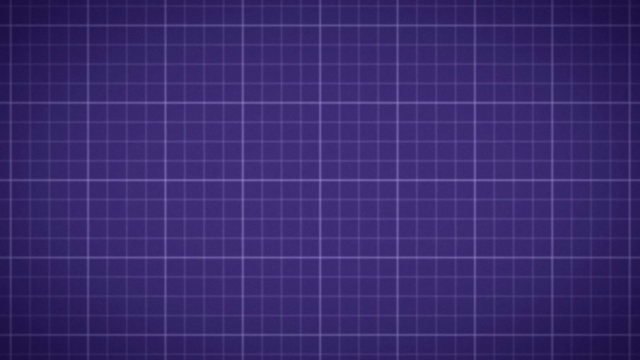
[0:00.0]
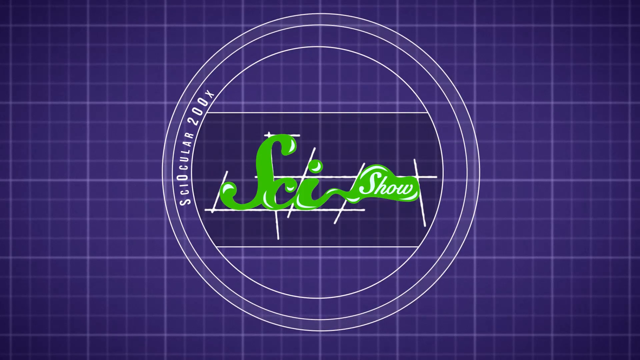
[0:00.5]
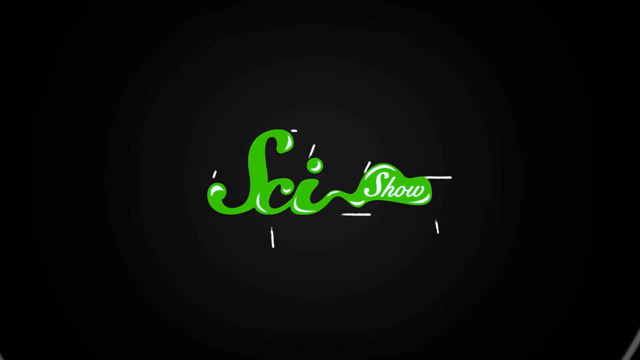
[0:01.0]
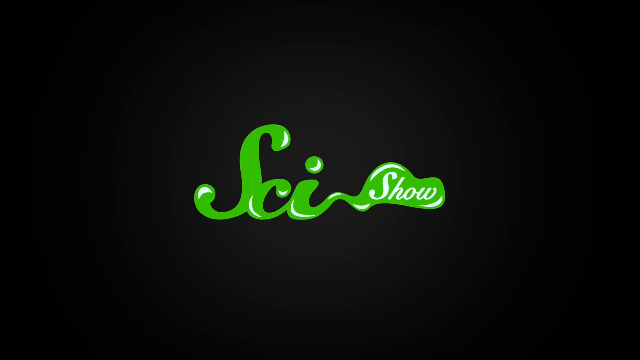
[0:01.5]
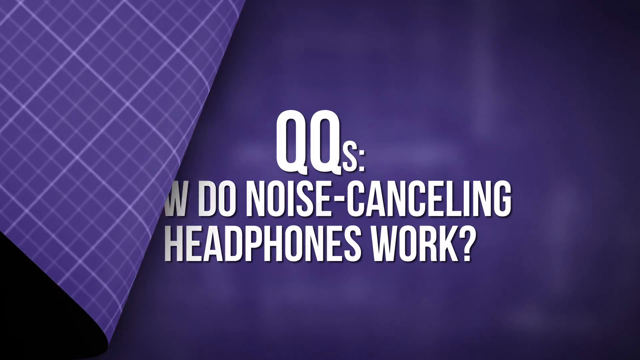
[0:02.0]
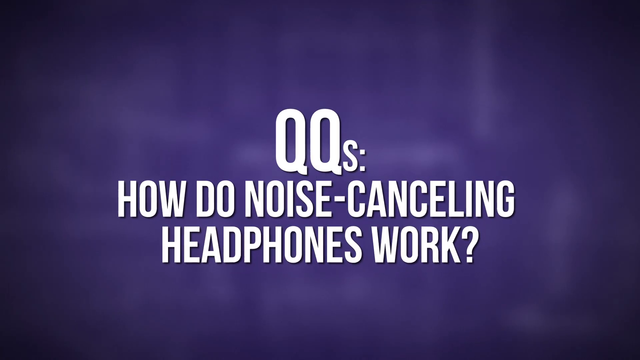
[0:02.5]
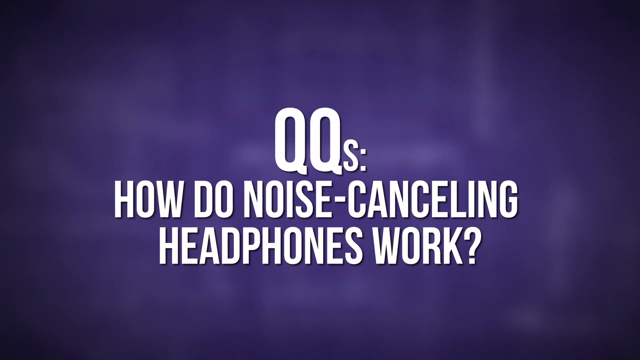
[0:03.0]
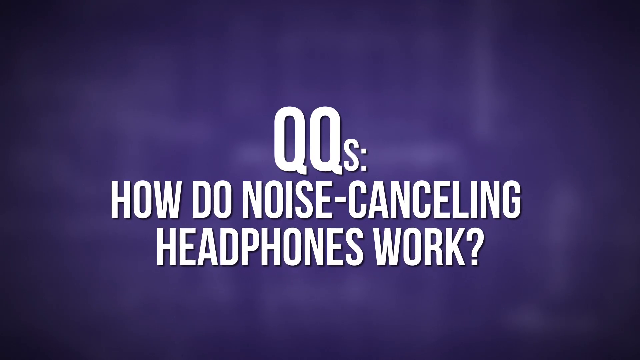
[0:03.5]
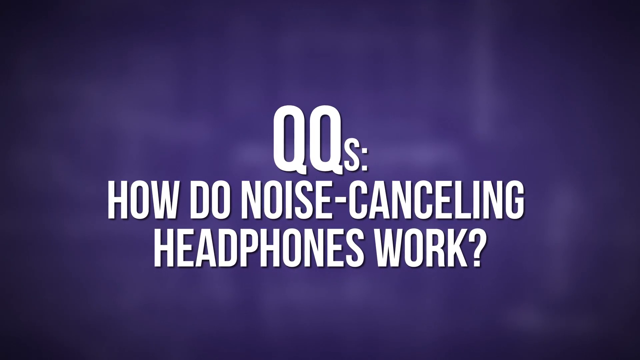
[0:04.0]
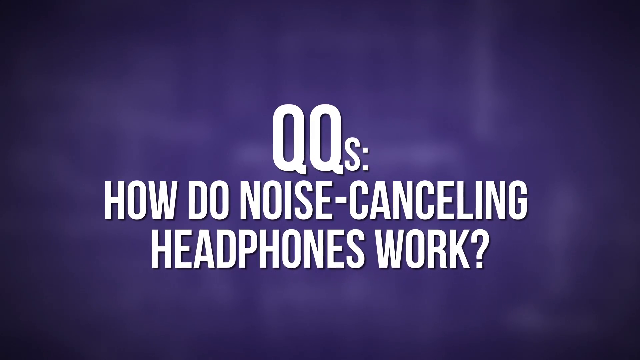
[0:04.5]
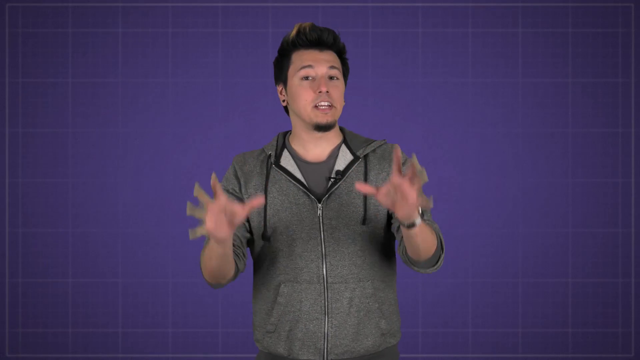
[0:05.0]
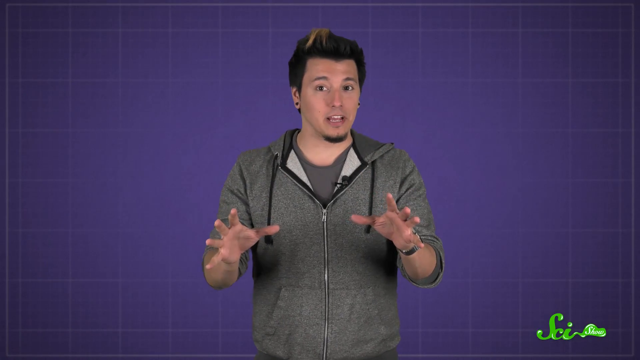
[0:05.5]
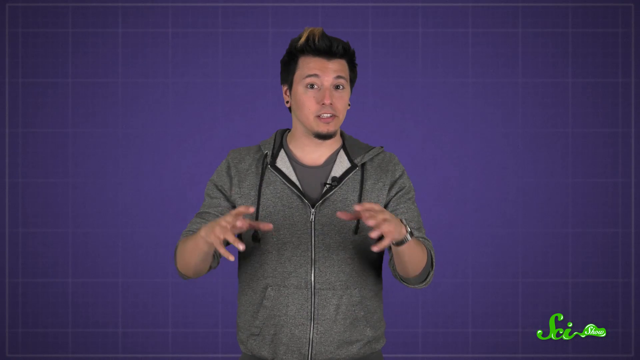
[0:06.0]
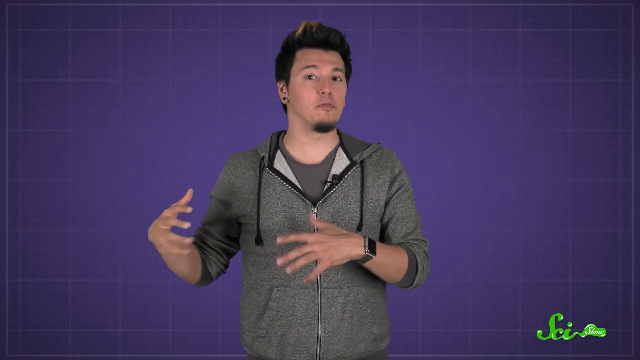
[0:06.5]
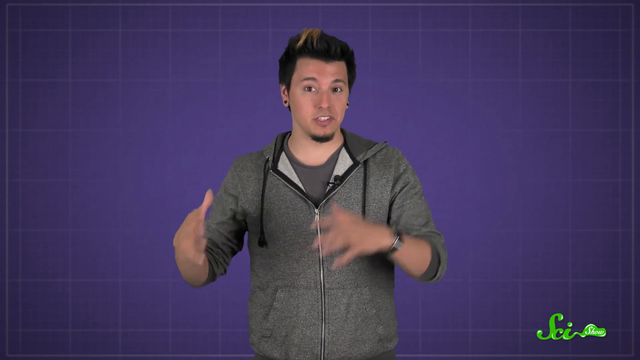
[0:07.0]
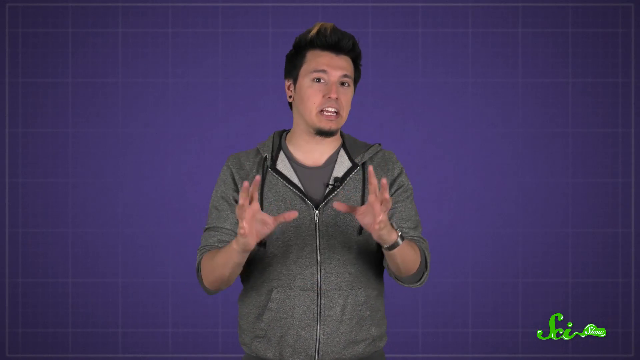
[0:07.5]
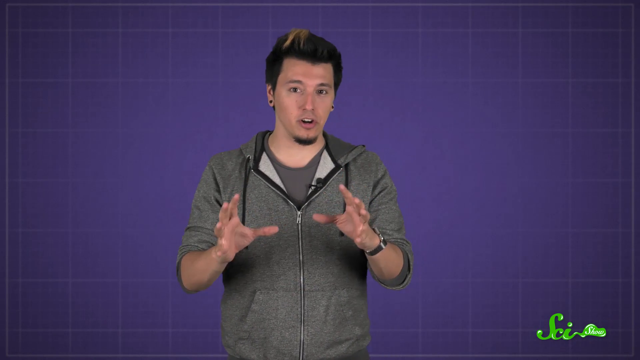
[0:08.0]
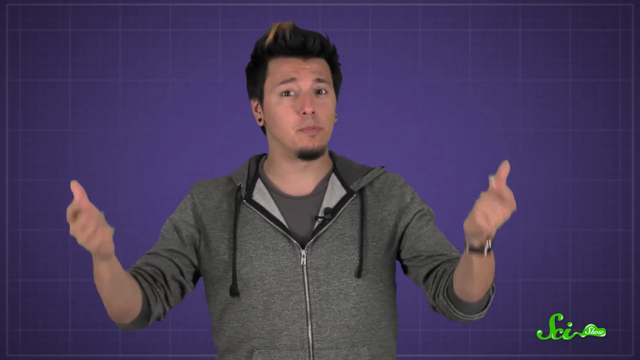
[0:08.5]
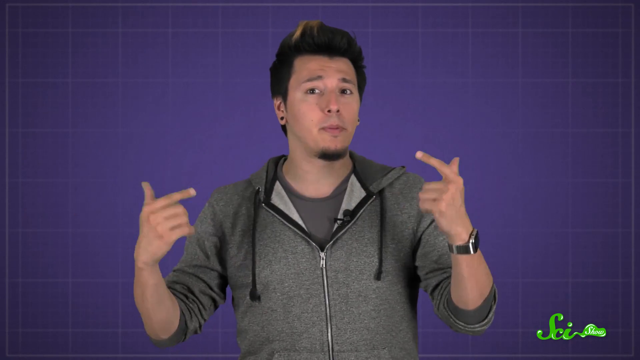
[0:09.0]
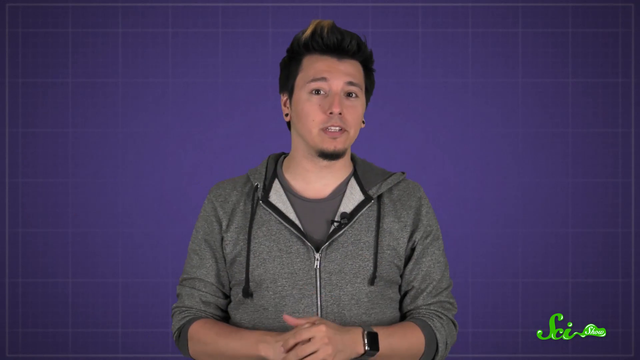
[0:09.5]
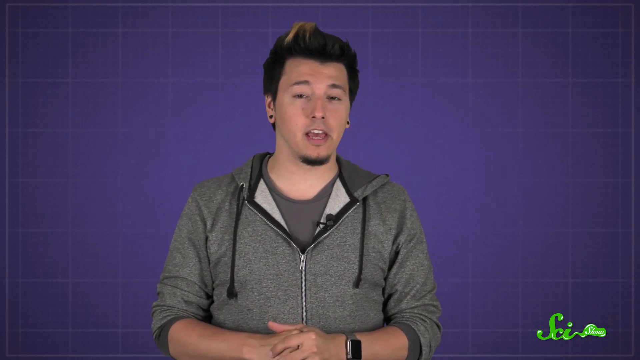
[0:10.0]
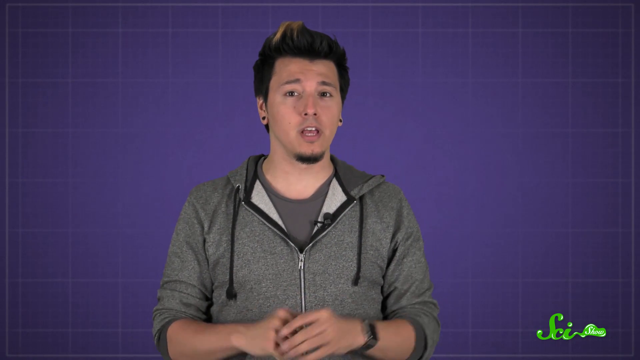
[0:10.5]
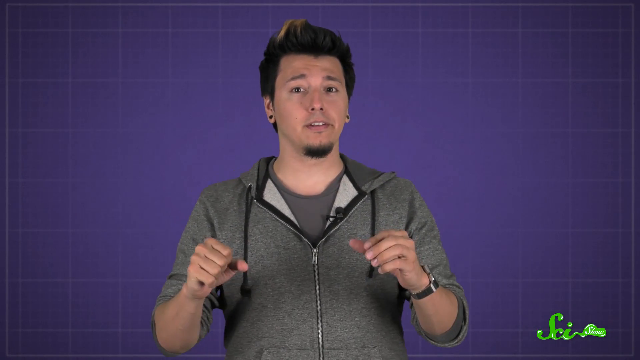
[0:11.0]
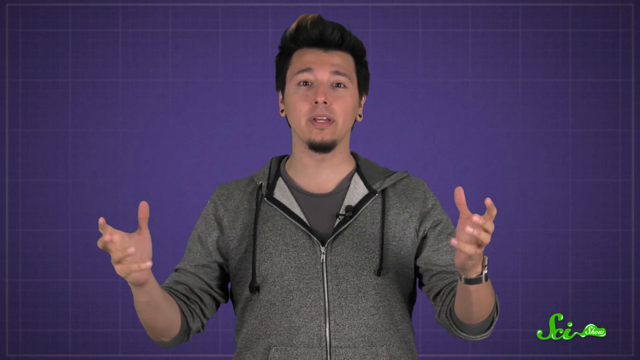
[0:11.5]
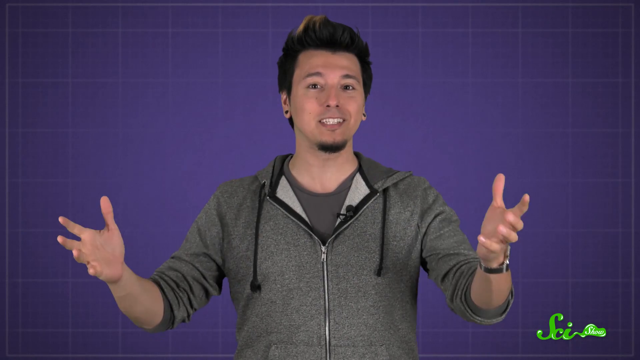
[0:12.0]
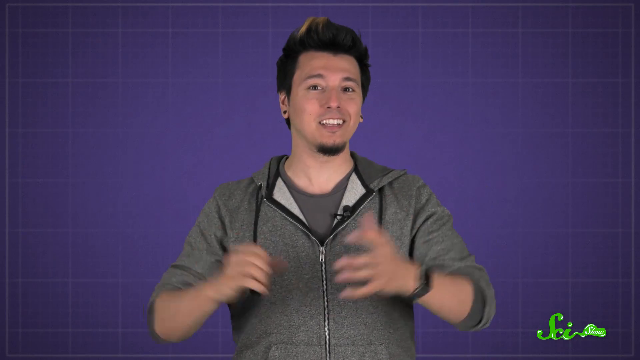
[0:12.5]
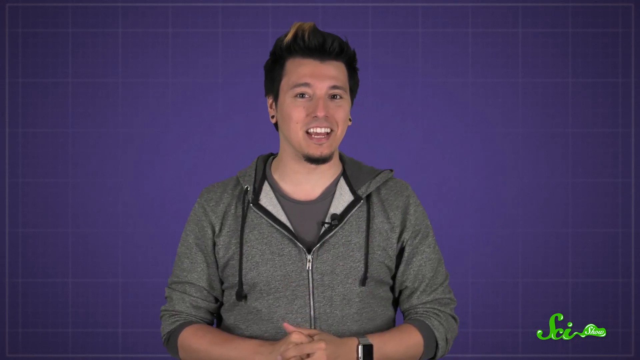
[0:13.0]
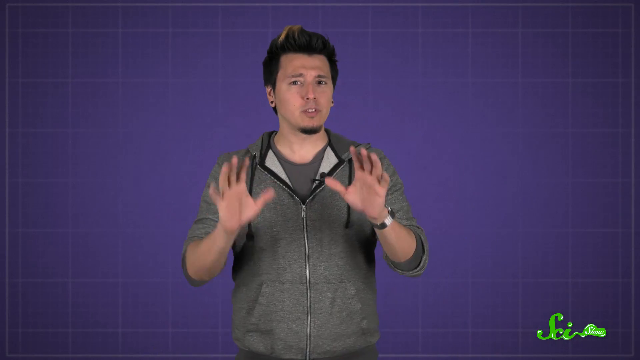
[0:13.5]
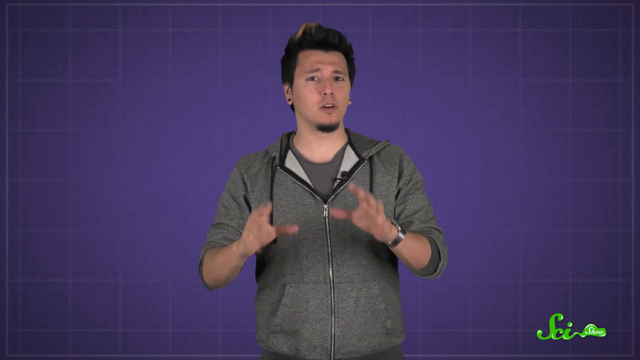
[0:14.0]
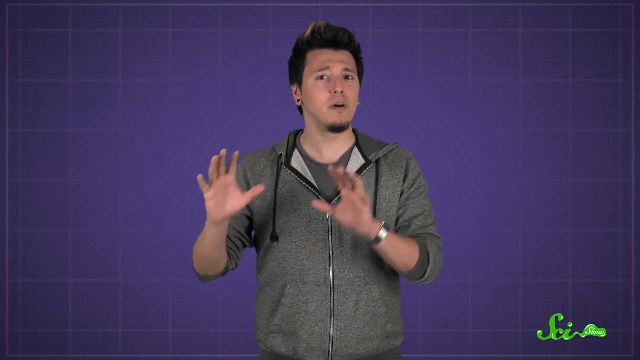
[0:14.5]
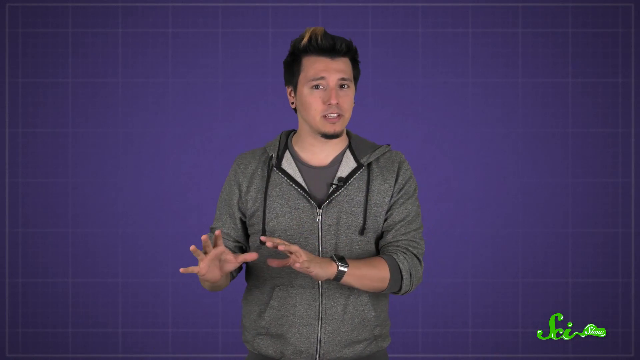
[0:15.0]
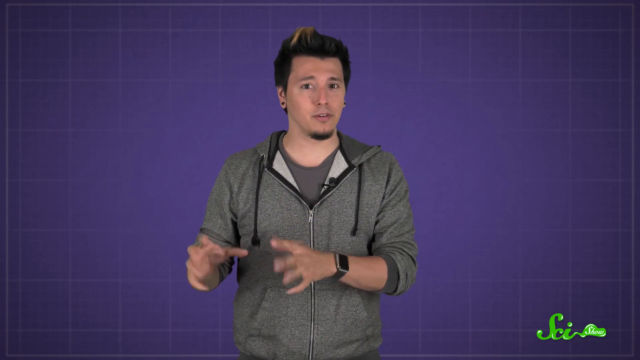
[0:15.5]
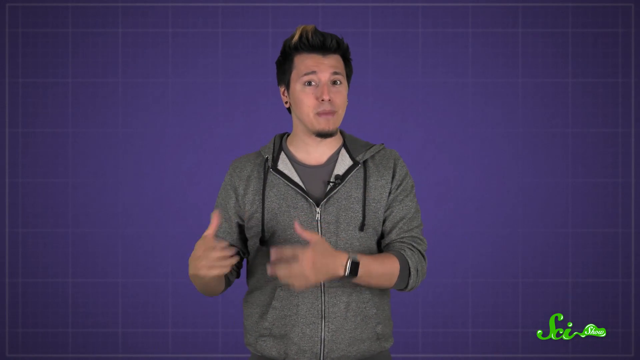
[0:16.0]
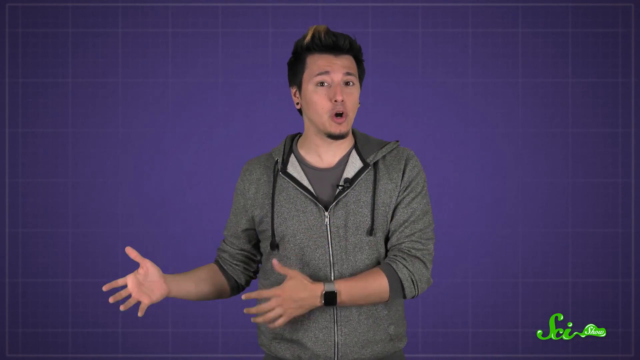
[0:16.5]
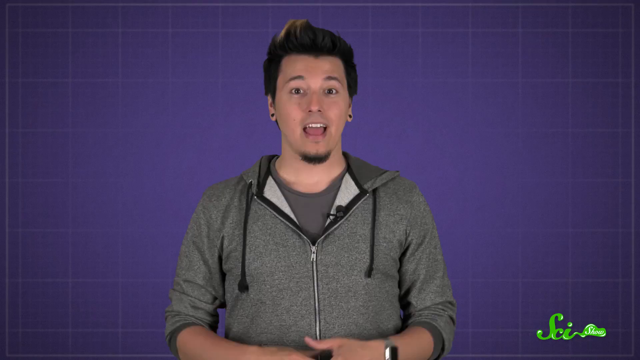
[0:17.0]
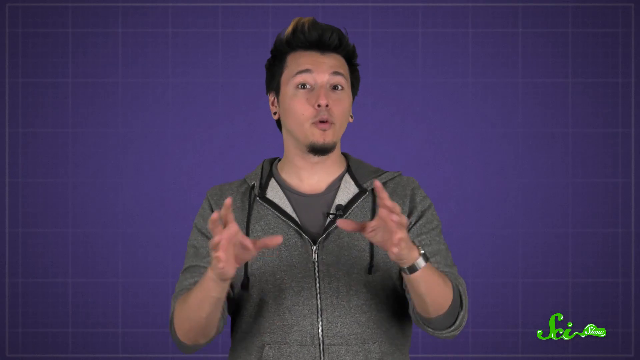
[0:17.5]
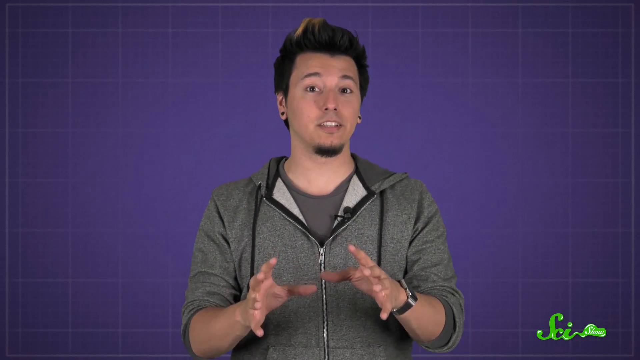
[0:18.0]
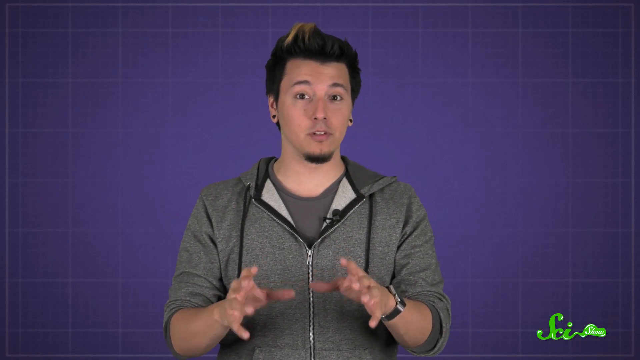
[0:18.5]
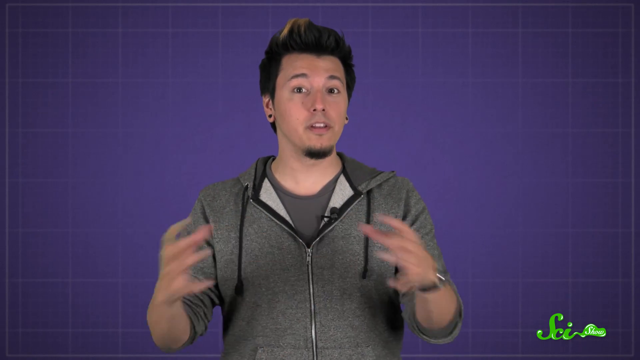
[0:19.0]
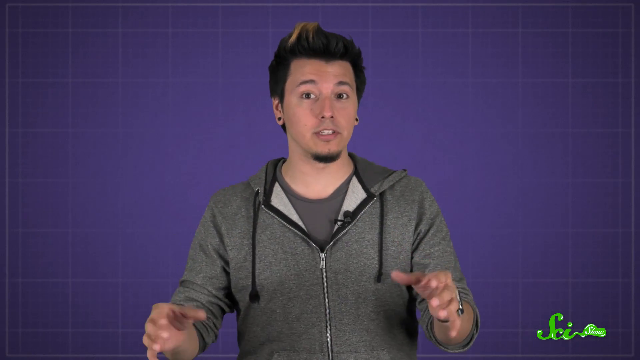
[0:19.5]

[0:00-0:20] The video opens on a dark blue checkered background with a logo roughly in the center, and the background turns black in the center. The logo reads "SciSHOW" in a bright green, almost slime-effect graphic, with "SHOW" in white lettering. The question "how do noise canceling headphones work?" then pops up, all in bold white lettering. A gentleman then appears in the dead center of the screen. The background is still blue, with some of the checkering in each corner, and the bright green, slime-effect SciShow logo is in the lower right-hand corner. He wears a gray zip-up hoodie and a smartwatch on his right wrist, and appears to maybe have plug earrings. He has short black hair with a bit of a blonde tip on the left side, and a black goatee.